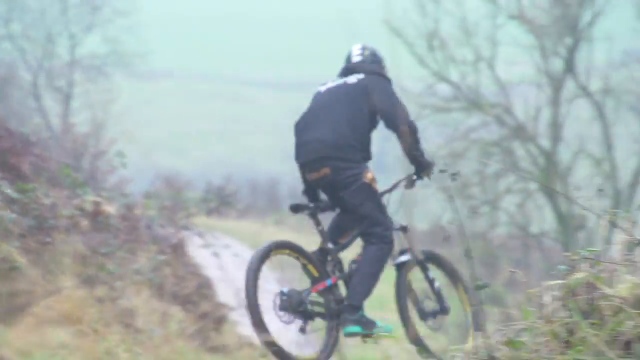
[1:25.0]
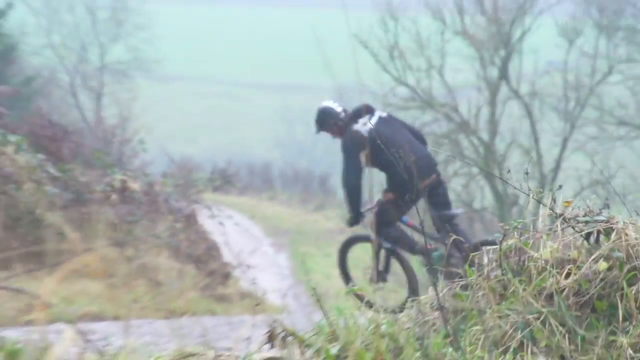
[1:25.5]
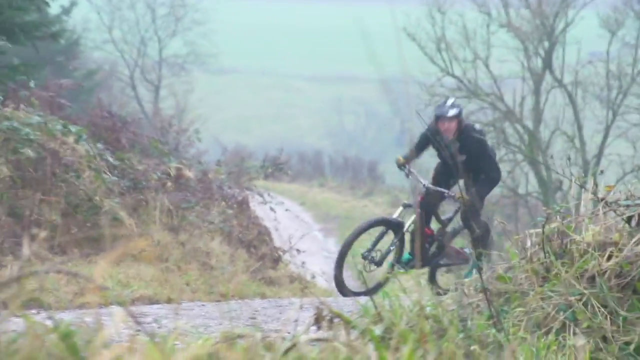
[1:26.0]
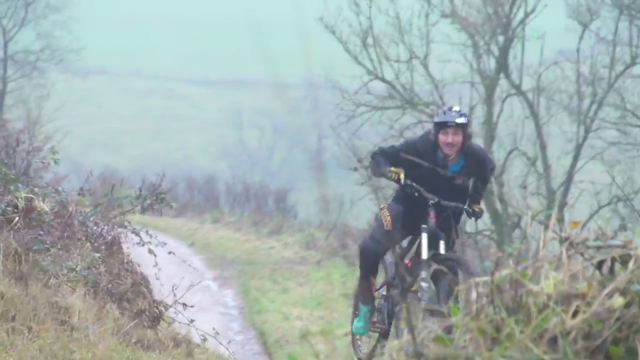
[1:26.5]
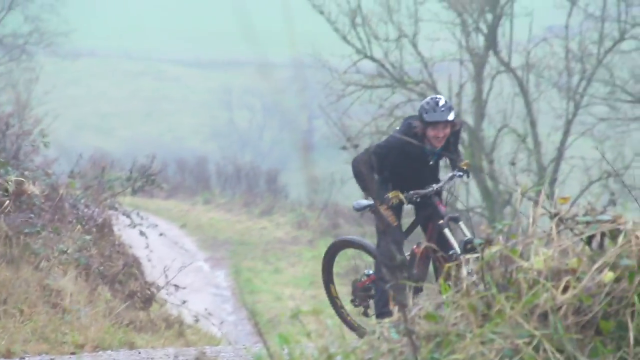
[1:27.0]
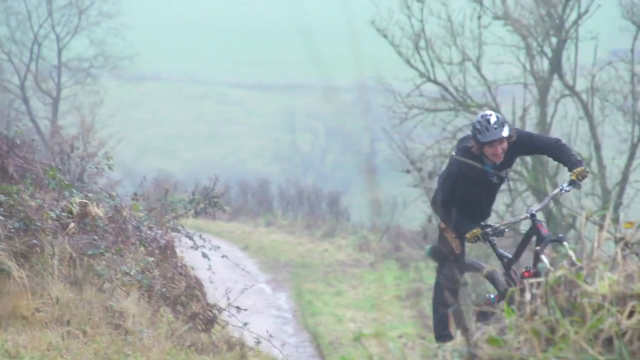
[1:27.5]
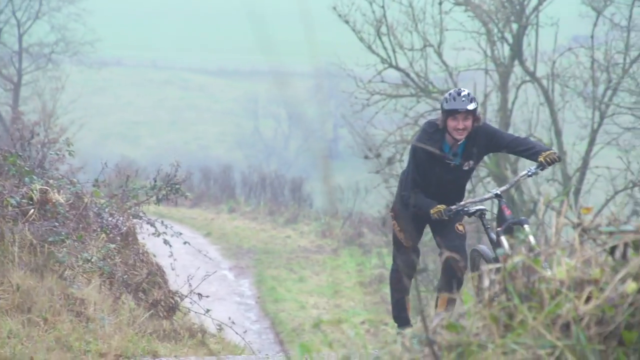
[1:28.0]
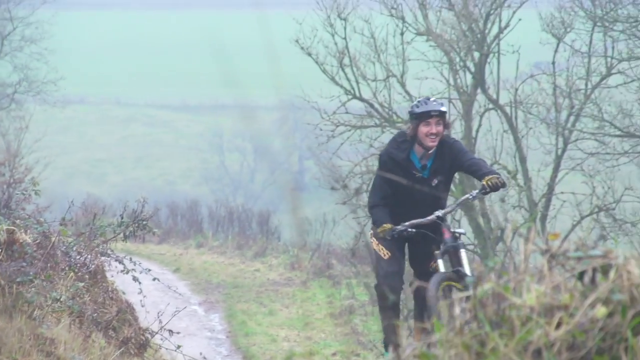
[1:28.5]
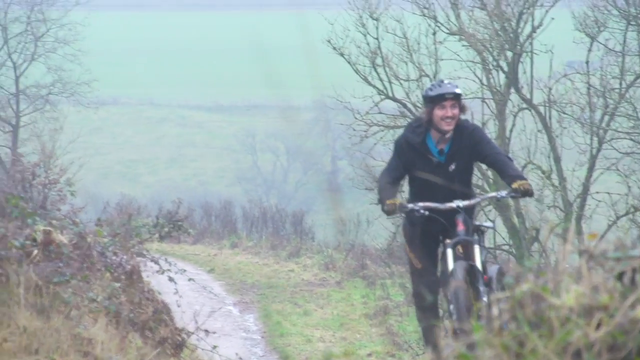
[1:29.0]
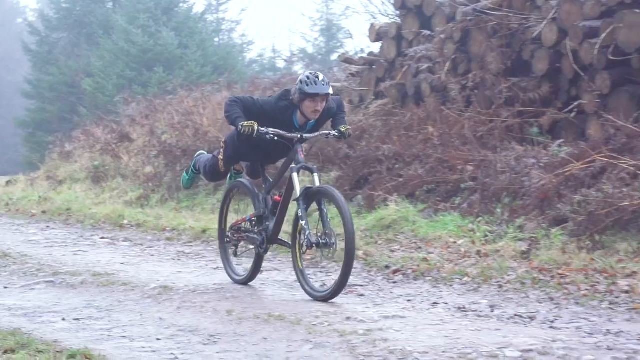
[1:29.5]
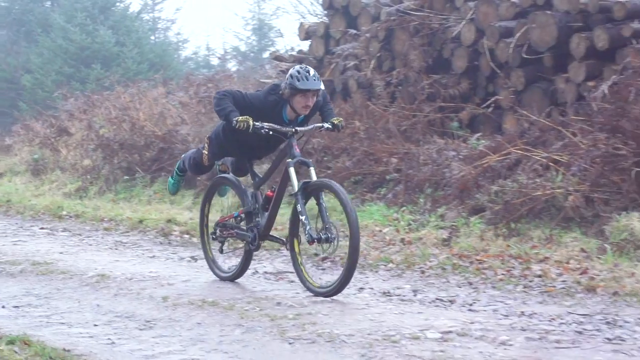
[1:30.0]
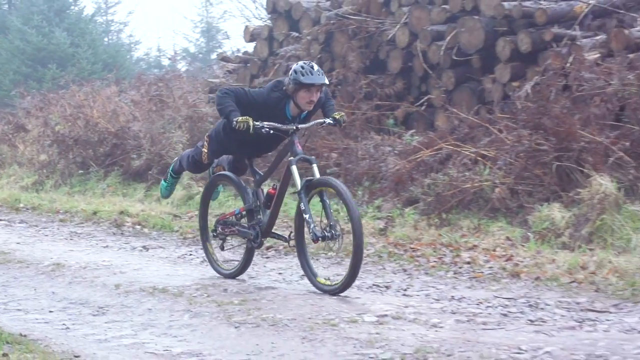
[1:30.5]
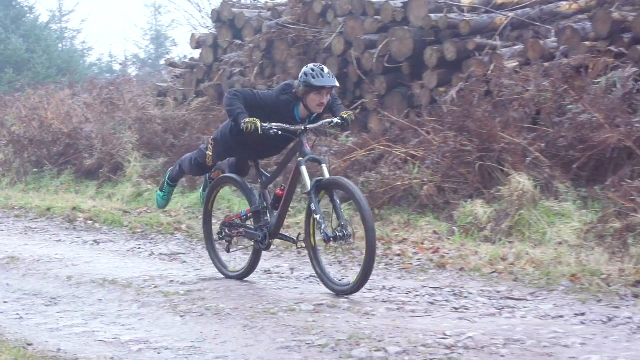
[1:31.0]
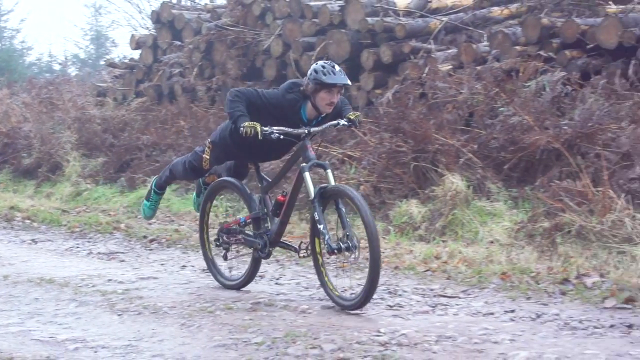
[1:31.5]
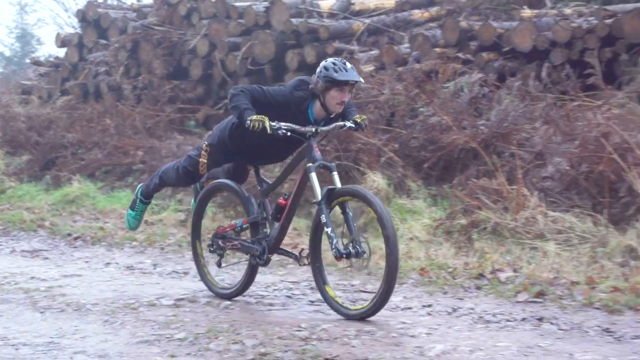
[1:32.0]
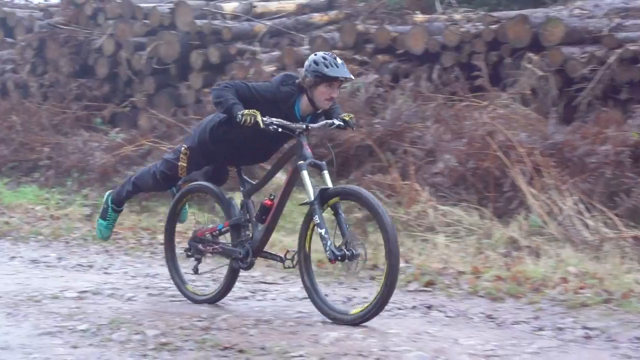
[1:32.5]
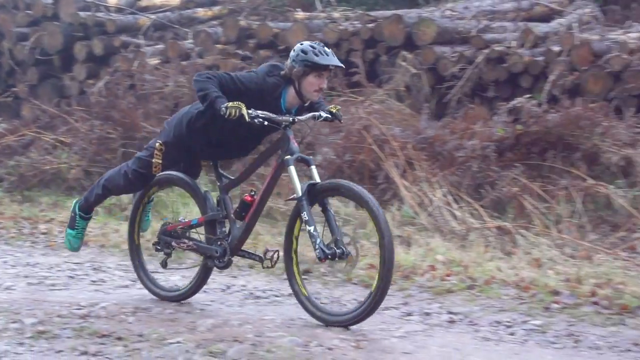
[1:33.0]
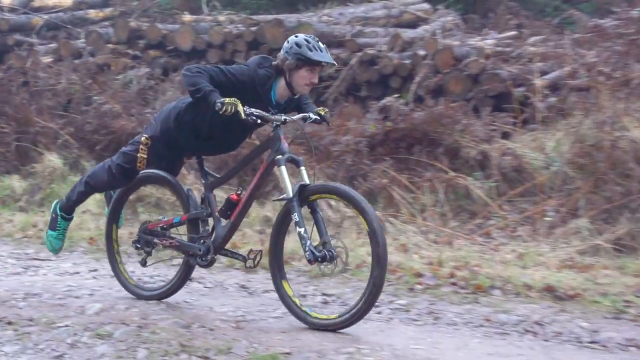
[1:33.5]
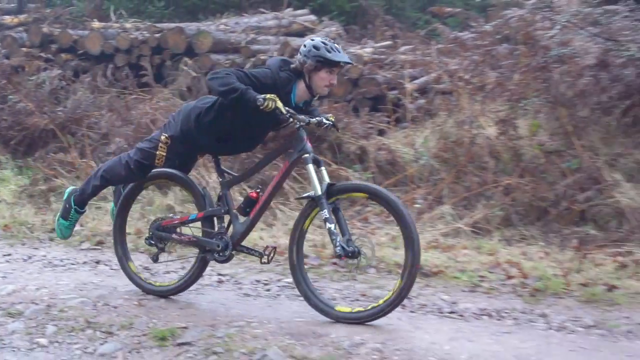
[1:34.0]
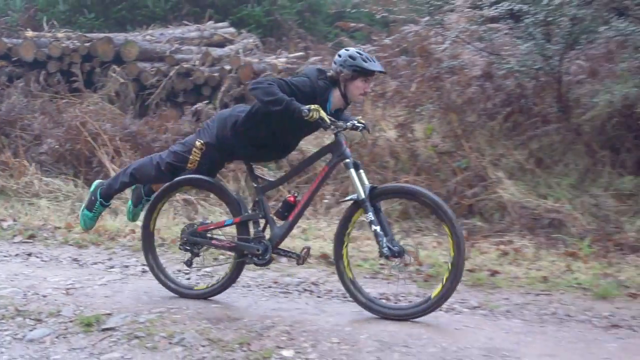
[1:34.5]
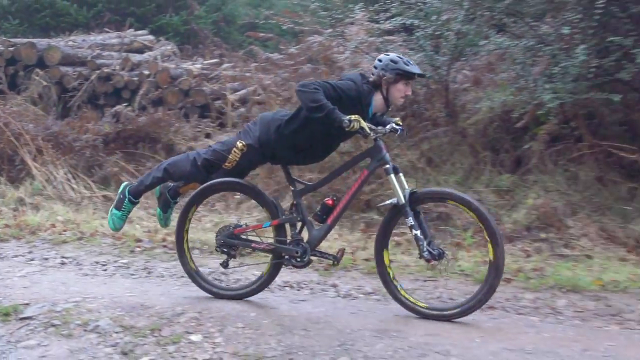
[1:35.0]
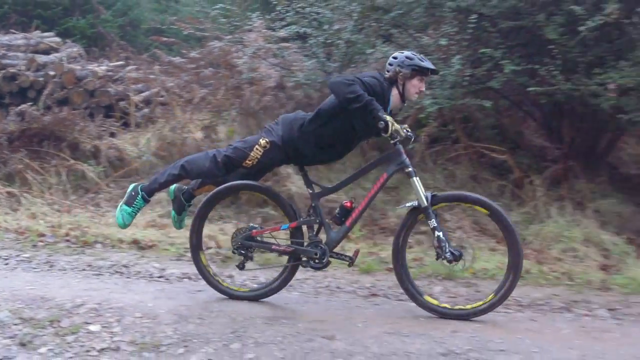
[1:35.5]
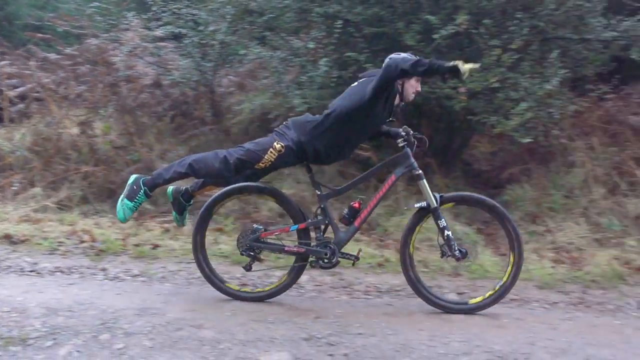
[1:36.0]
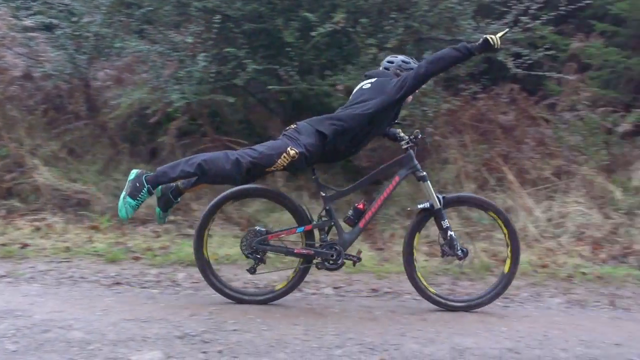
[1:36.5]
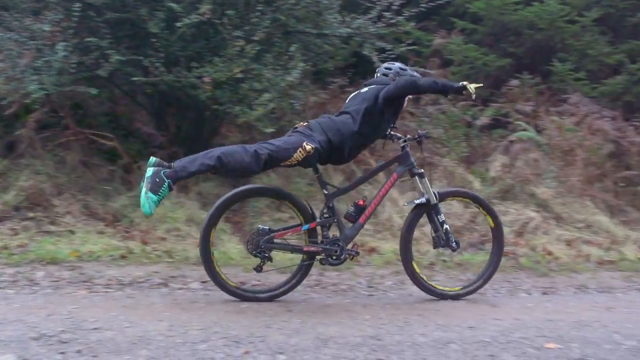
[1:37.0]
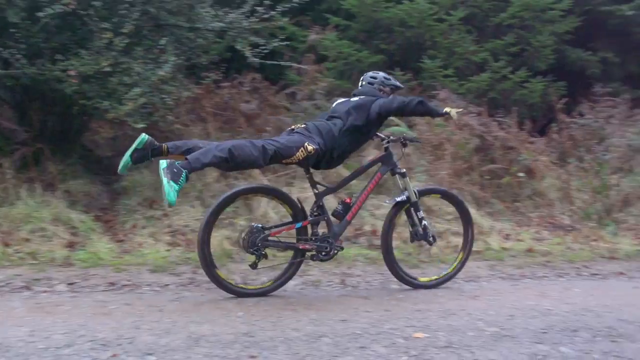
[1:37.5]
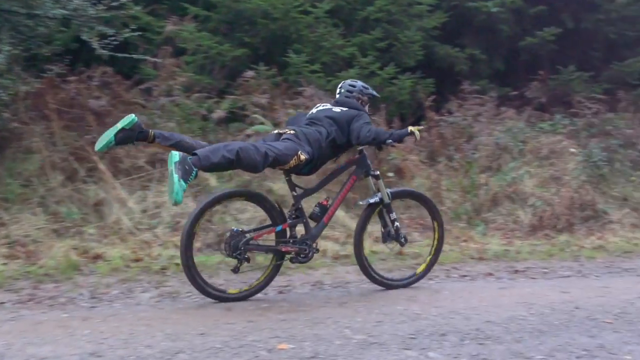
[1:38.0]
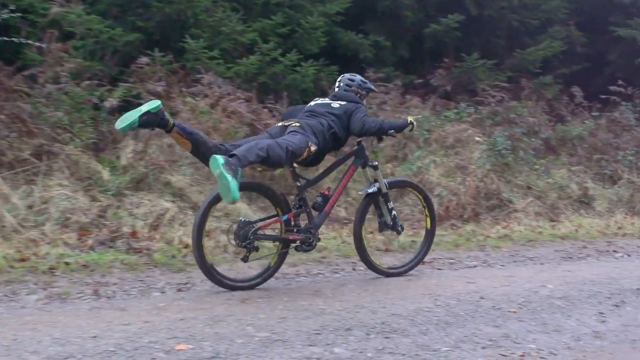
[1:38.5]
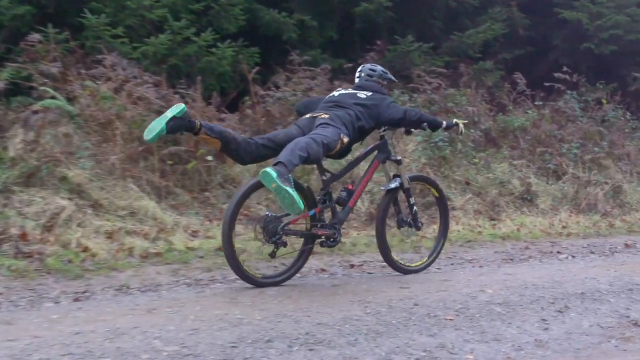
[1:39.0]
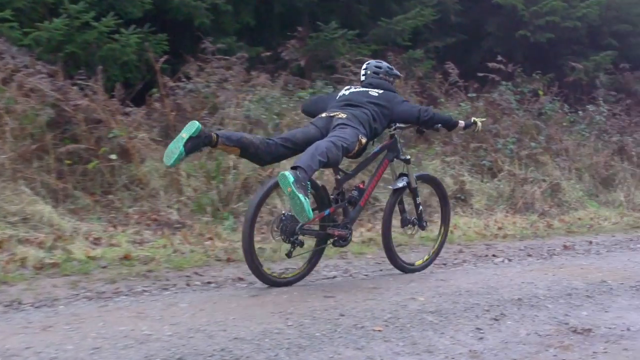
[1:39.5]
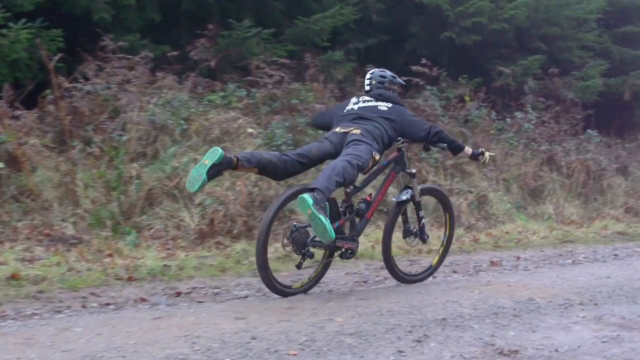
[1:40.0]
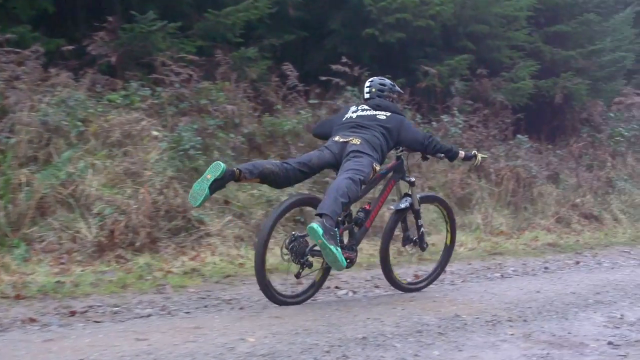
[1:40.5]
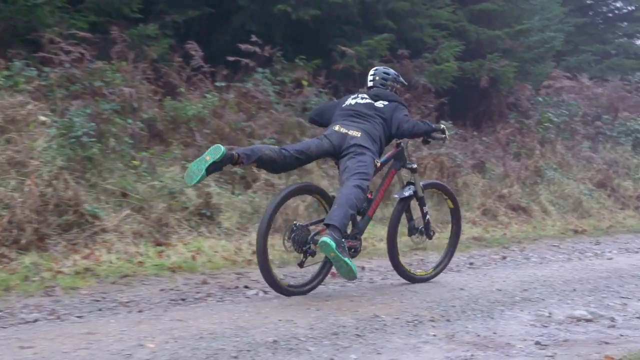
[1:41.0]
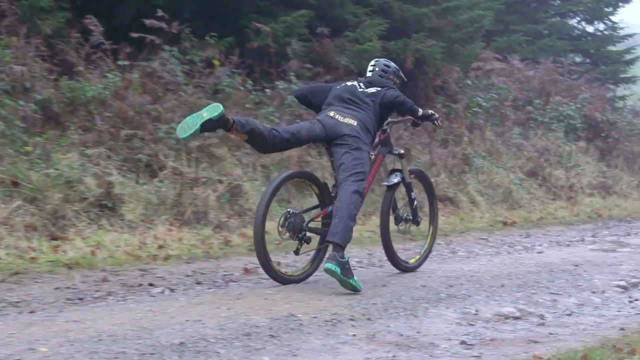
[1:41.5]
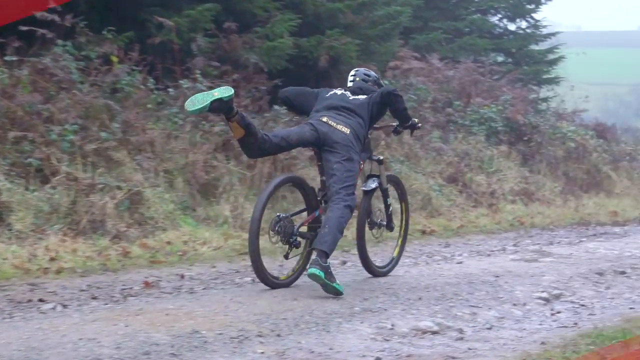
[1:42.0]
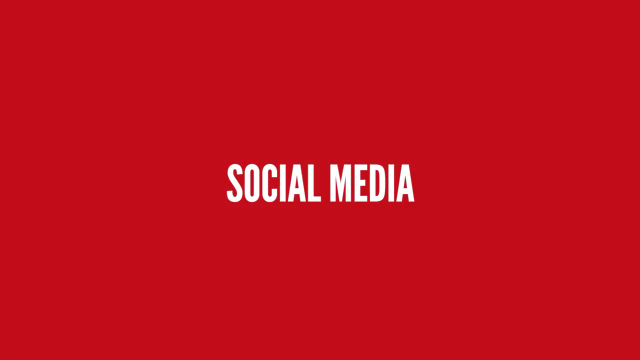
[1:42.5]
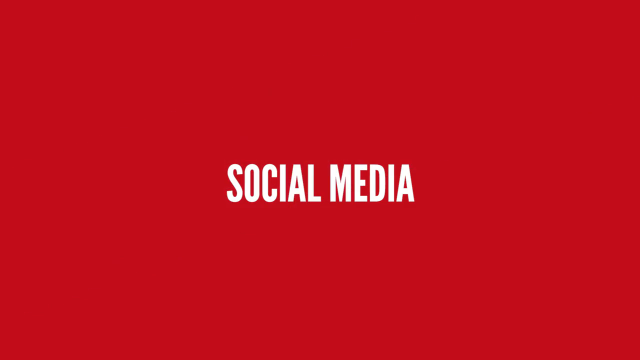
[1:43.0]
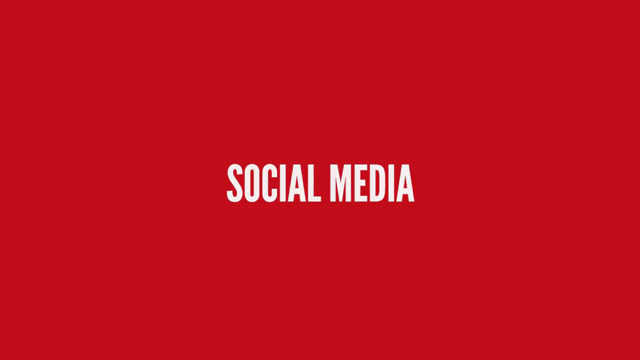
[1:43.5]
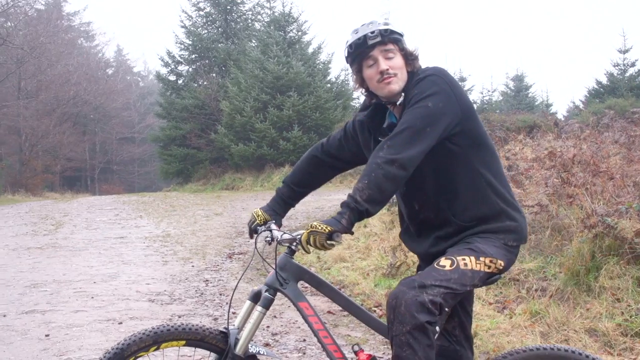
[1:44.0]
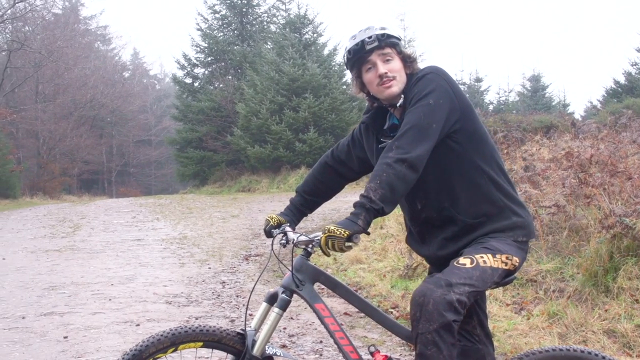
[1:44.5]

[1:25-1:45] A guy on a bike does circles. A slow-motion shot shows him lying flat on the bike; the slow motion lasts about 5 seconds, though he is lying on the bike for maybe 2 seconds. He is a pretty tall guy and covers the complete bike, with his hands on the handlebar and his feet hanging past the back wheel. His feet kind of touch the ground as he gets back on the bike. Before the shot ends, text says something about the next trick, apparently called something like social media.